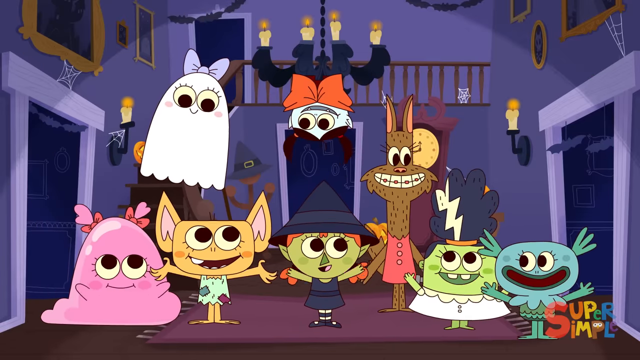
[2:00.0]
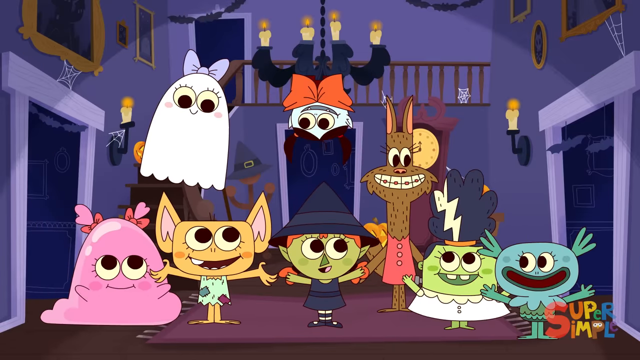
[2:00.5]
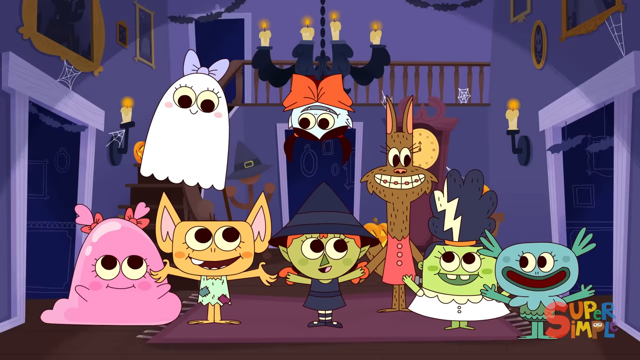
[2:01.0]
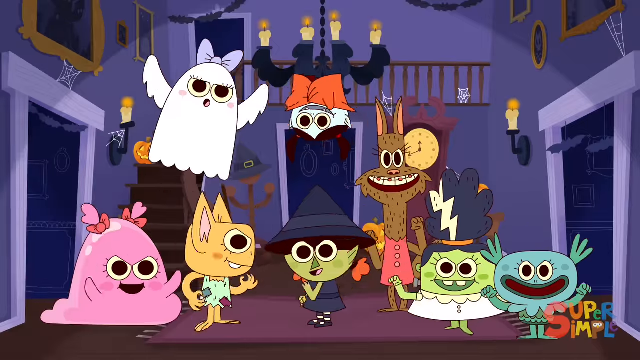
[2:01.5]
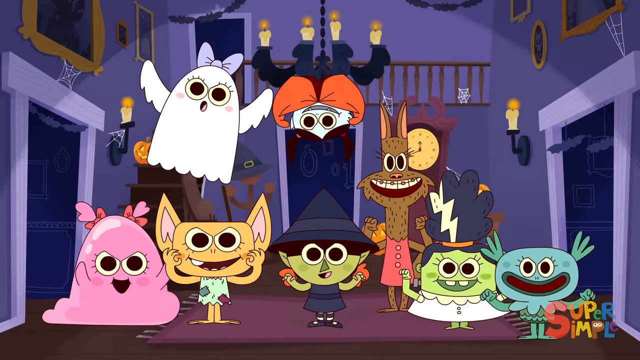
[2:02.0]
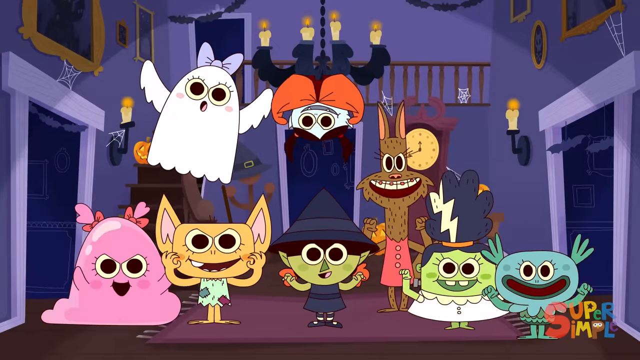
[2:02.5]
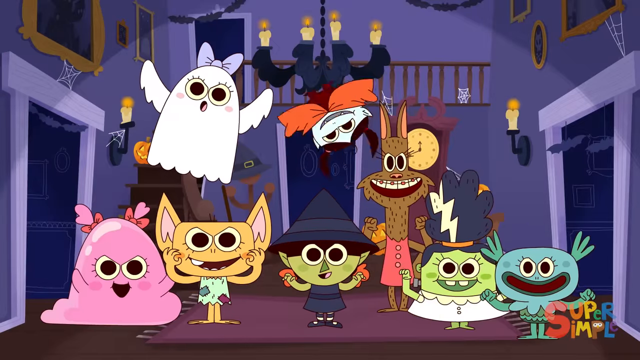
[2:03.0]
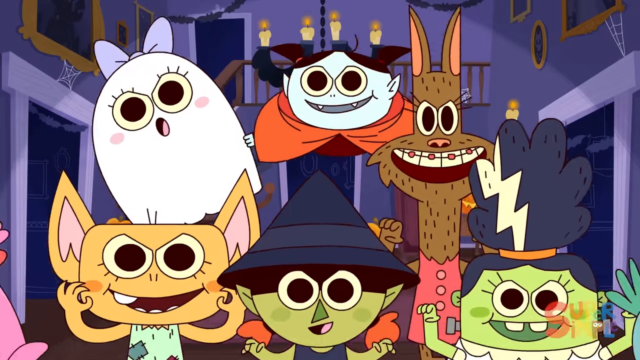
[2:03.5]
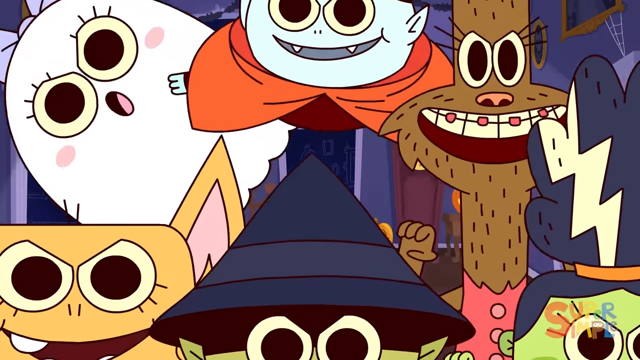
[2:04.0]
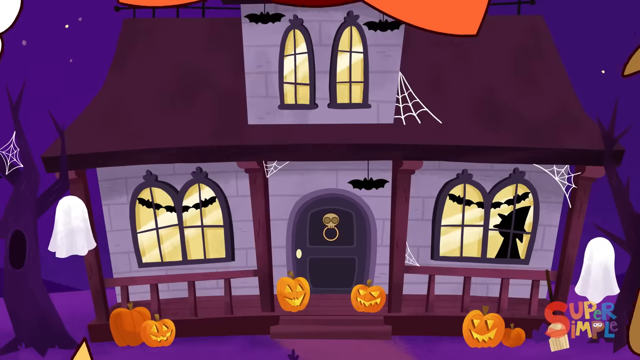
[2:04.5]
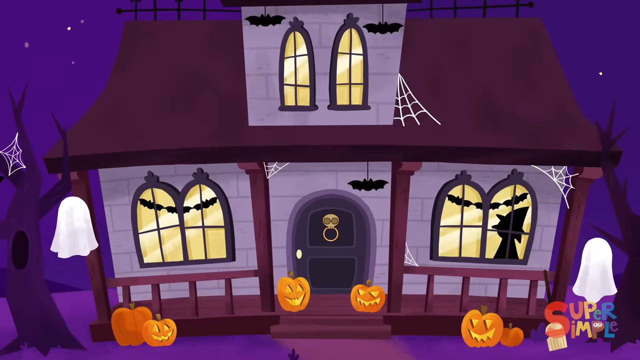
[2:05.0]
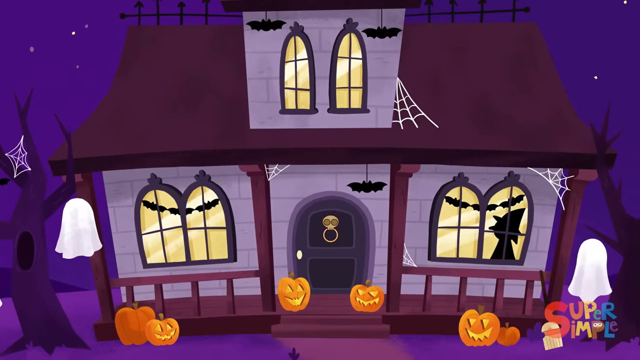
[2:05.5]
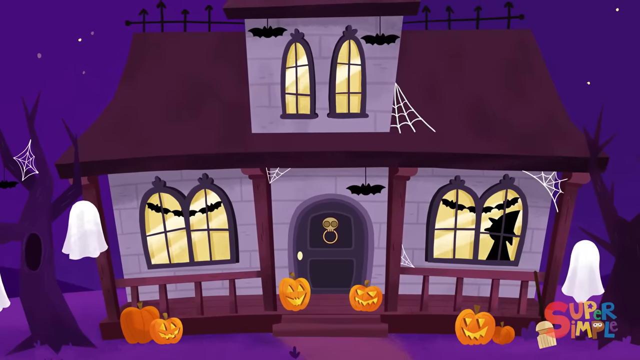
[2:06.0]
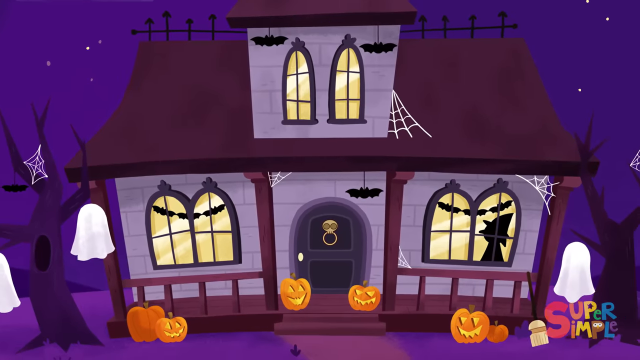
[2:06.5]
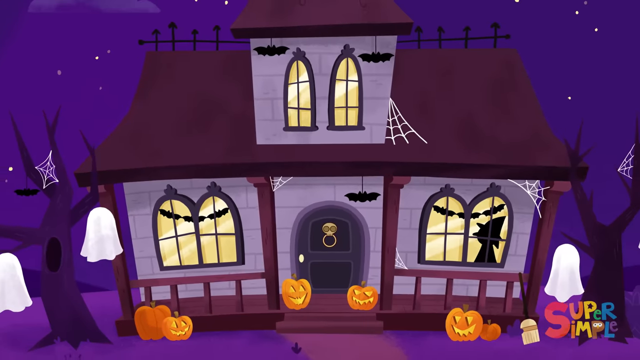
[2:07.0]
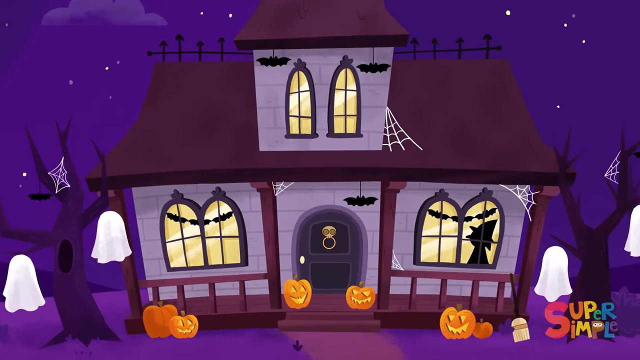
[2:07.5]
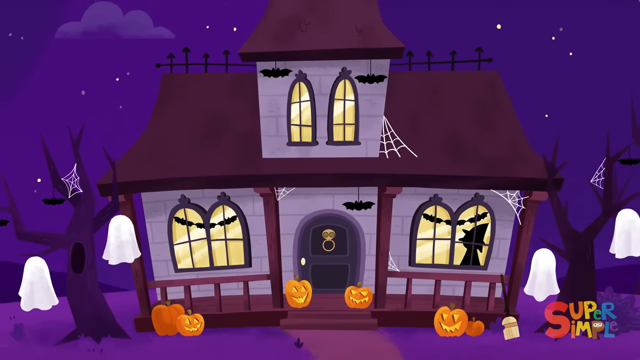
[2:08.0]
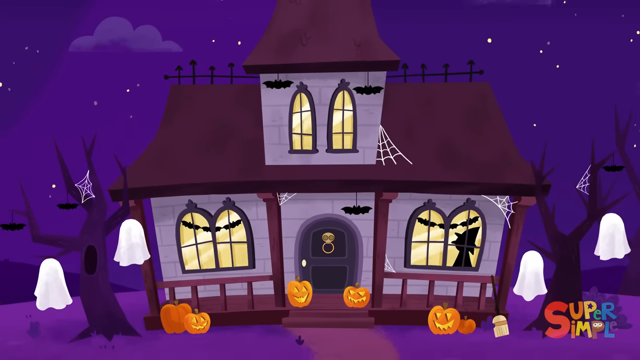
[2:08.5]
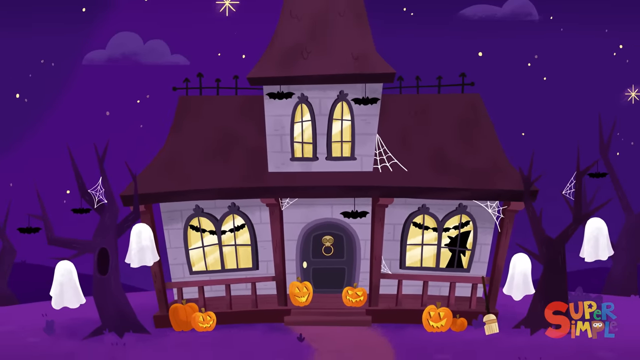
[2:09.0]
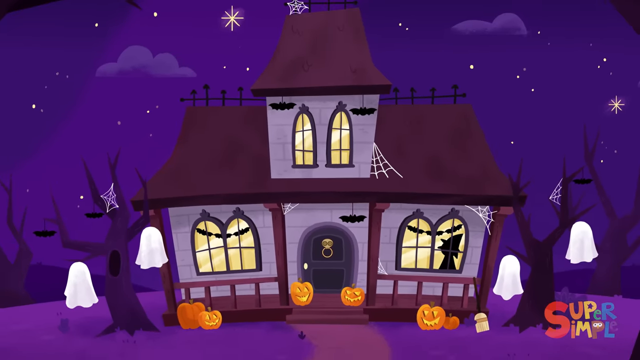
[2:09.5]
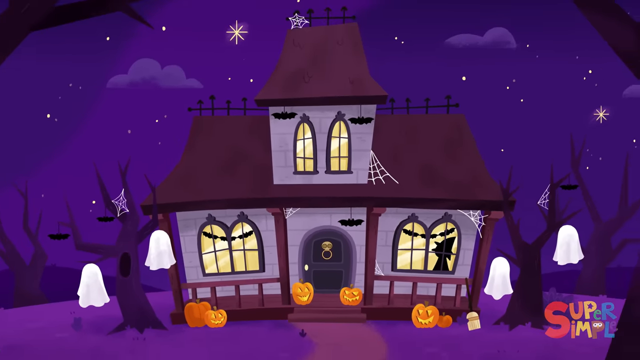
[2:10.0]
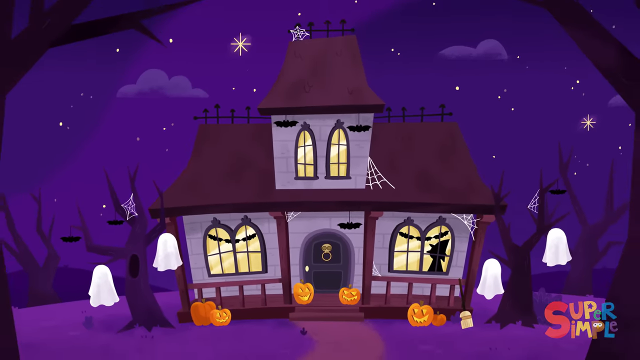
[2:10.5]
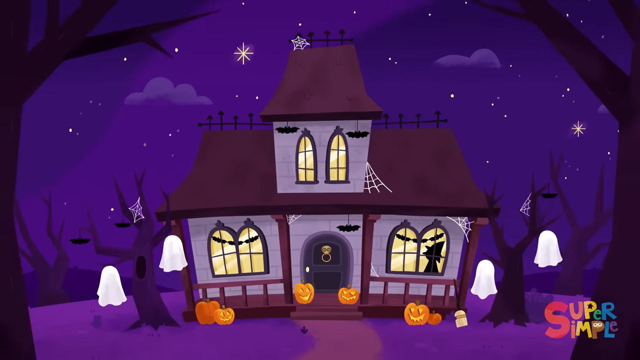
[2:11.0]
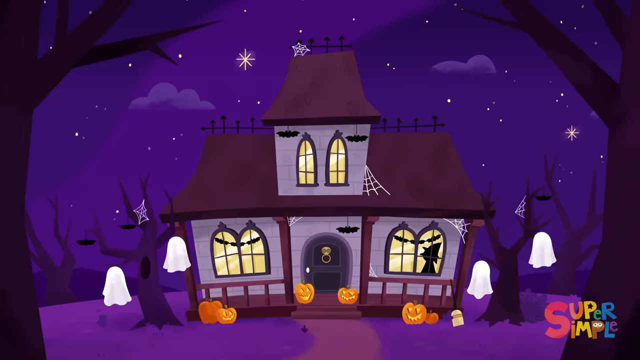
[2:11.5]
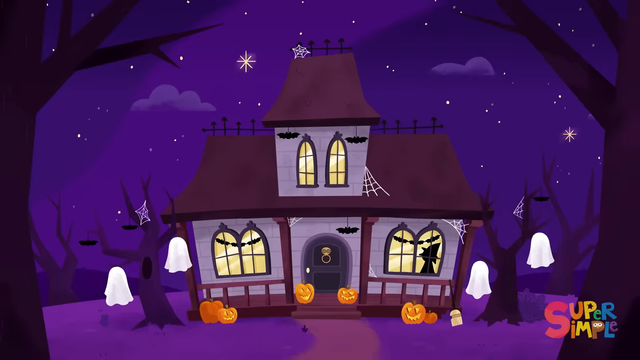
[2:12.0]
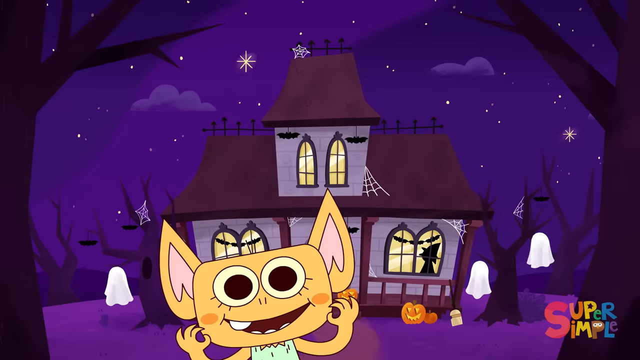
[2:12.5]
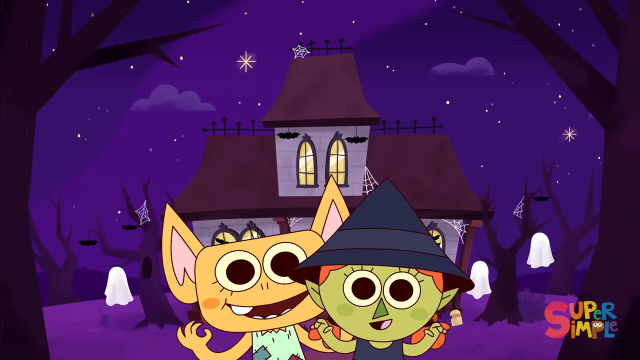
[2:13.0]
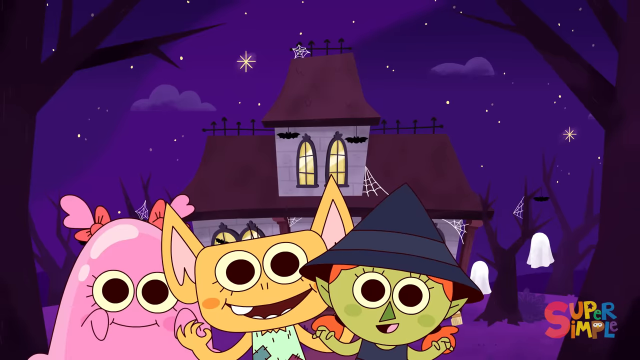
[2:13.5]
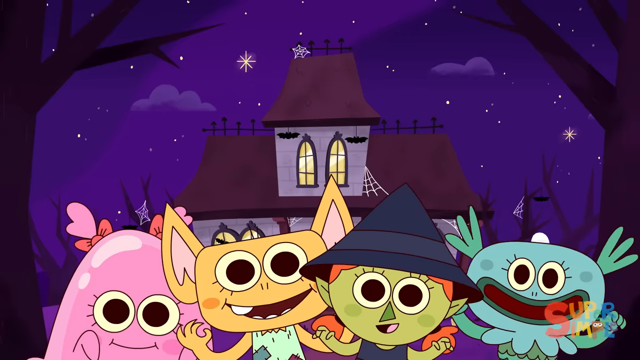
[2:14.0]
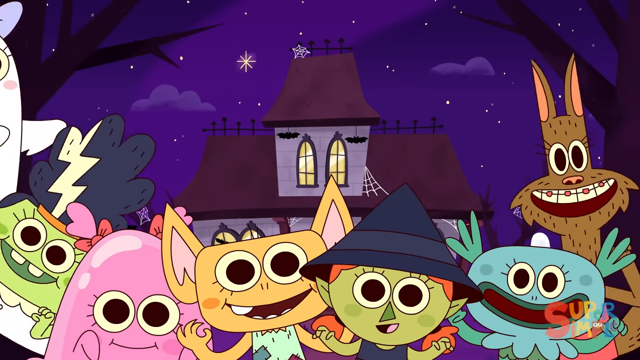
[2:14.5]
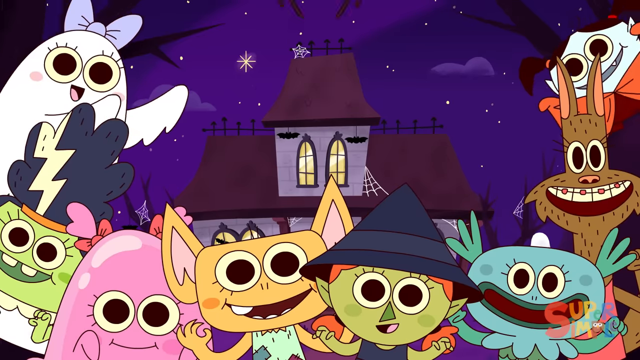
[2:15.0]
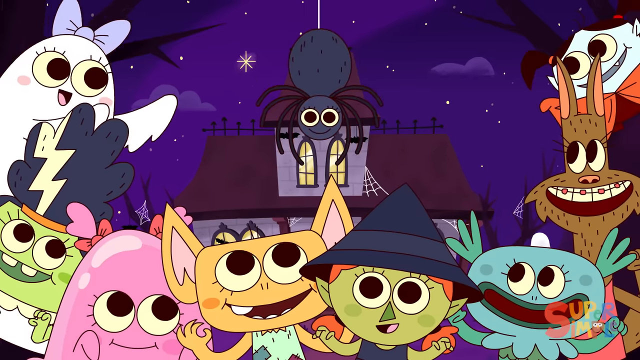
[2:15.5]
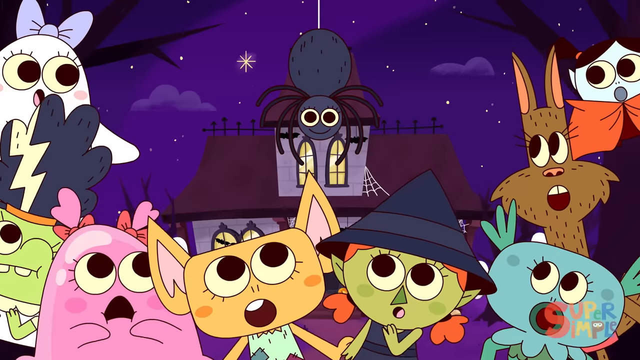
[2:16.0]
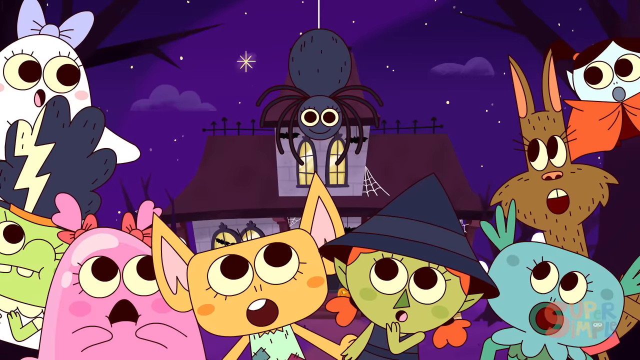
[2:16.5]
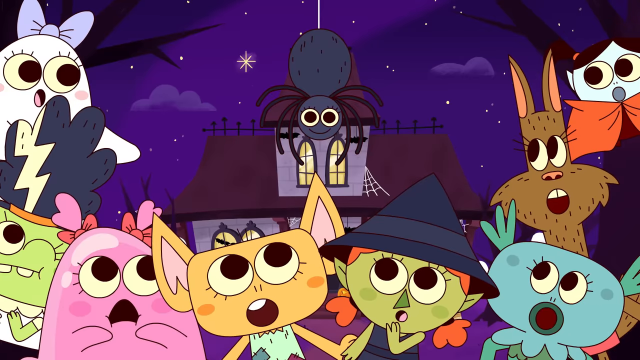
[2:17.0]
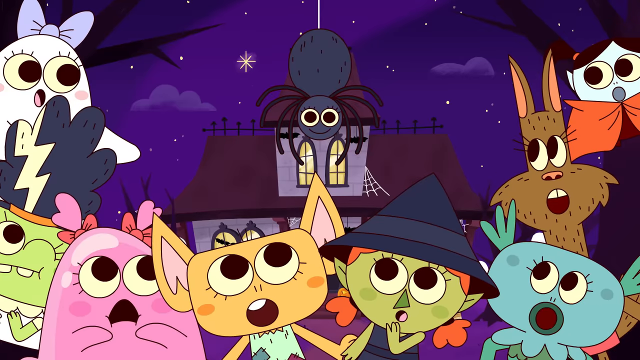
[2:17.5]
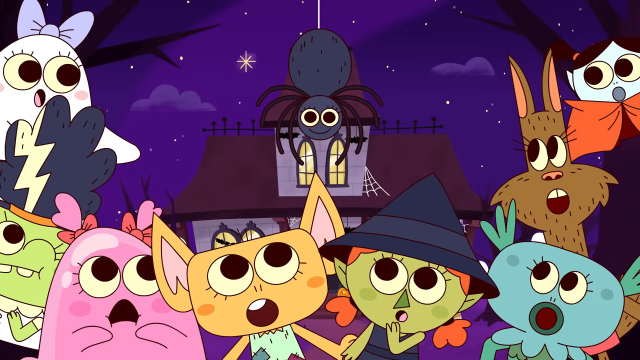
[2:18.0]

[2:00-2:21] The view is back in the main room, apparently having gone through the front door of the spooky house. All of the creatures seem to be lined up in front of the camera for a kind of curtain call. They briefly turn around, then turn back with their hands raised in a spooky, scary gesture, and appear to rush the camera, which transitions to a view from outside the house looking at the front door. The ghosts' blankets adorn the trees, and the pumpkins are now jack-o'-lanterns. All the creatures appear in a circle around the edges of the frame, and finally the main spider comes down from its web above them; the rest of the creatures look kind of startled, as if the spider's appearance was unexpected. This appears to be the final image of the spooky cartoon.